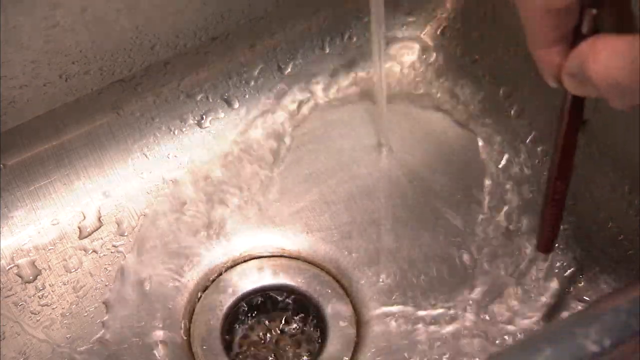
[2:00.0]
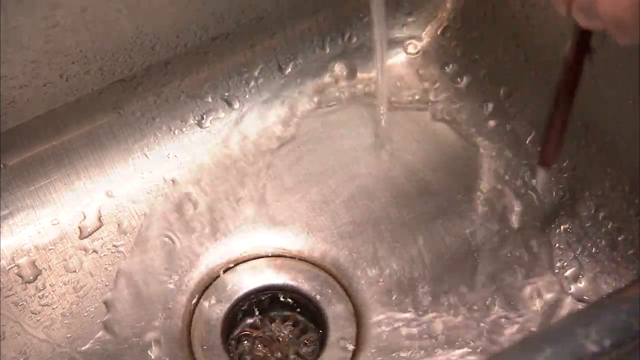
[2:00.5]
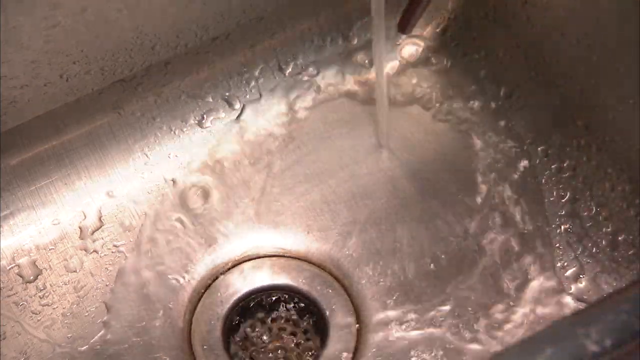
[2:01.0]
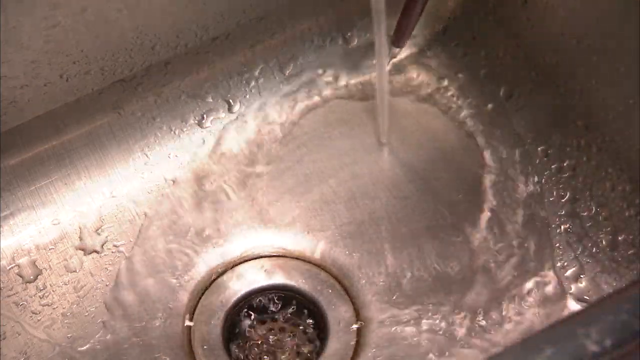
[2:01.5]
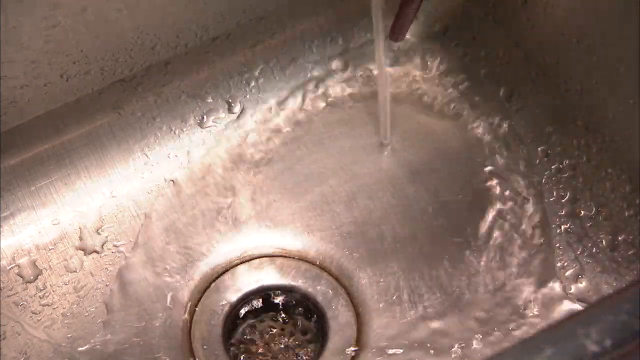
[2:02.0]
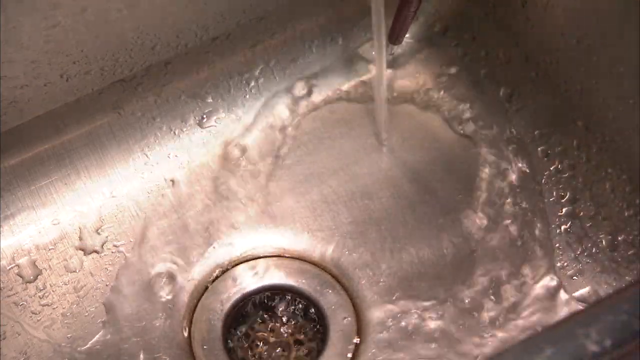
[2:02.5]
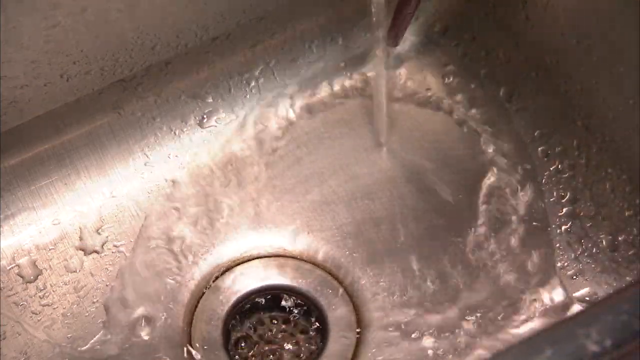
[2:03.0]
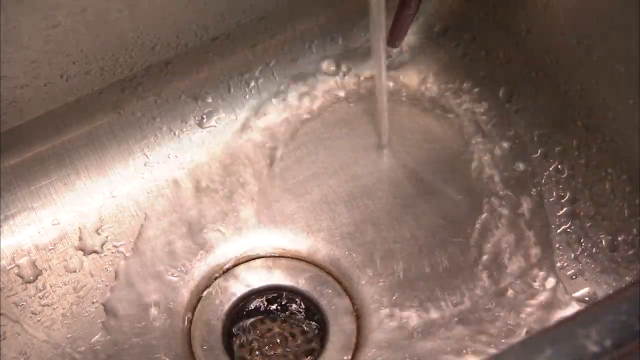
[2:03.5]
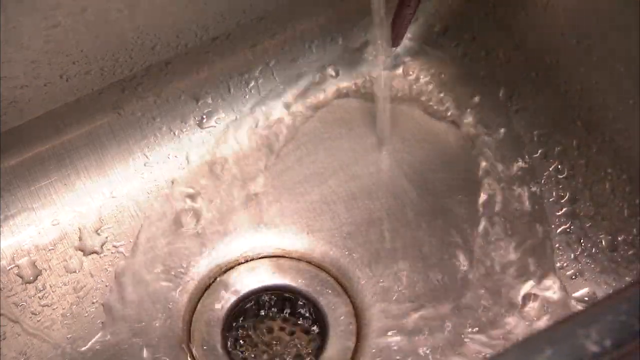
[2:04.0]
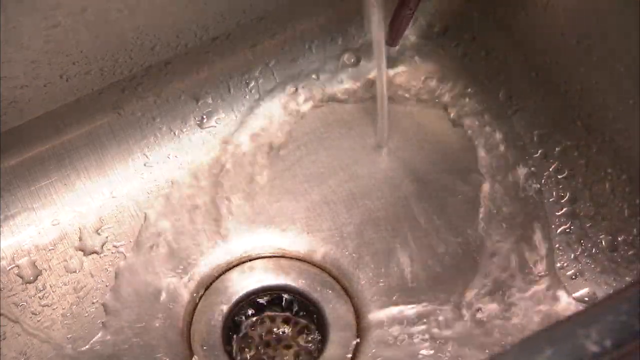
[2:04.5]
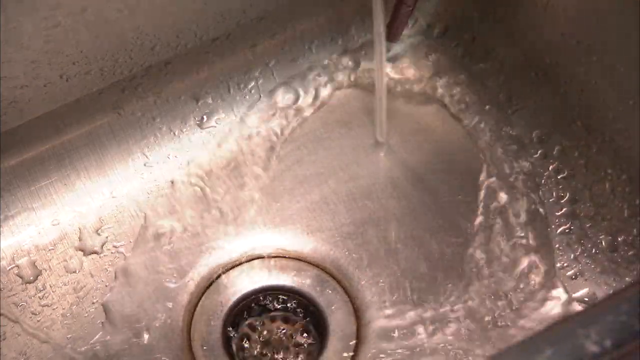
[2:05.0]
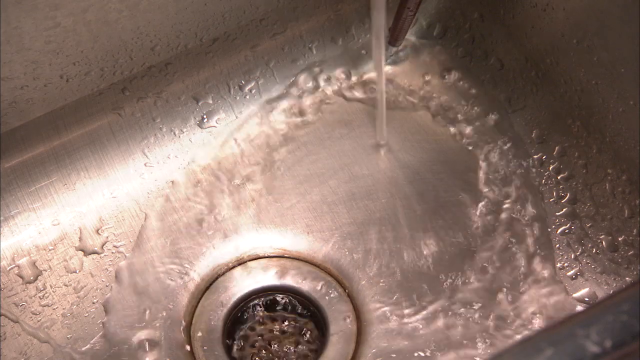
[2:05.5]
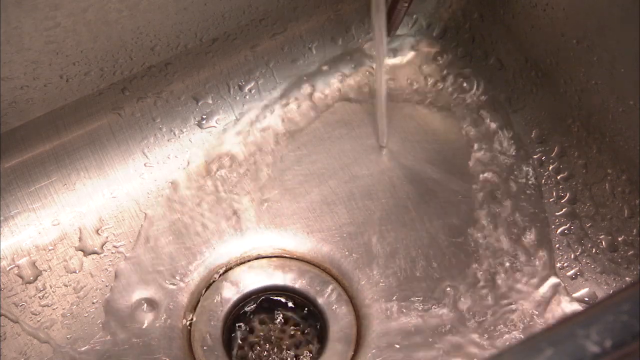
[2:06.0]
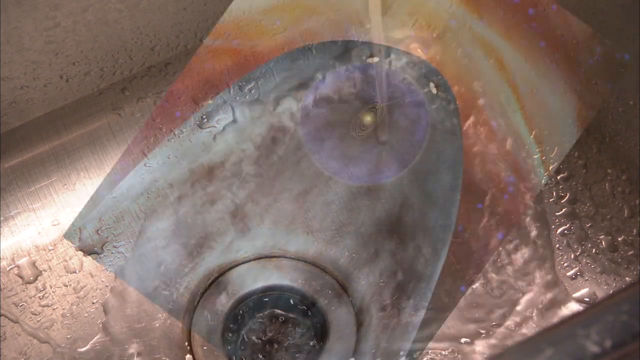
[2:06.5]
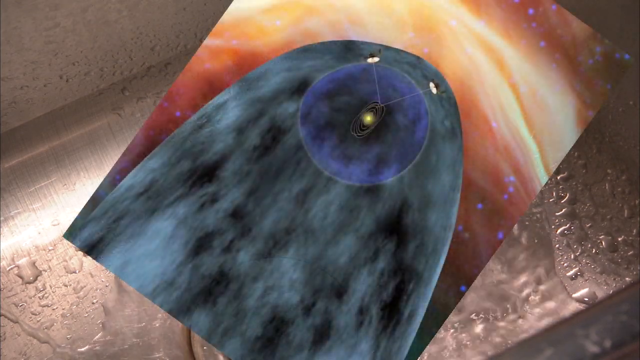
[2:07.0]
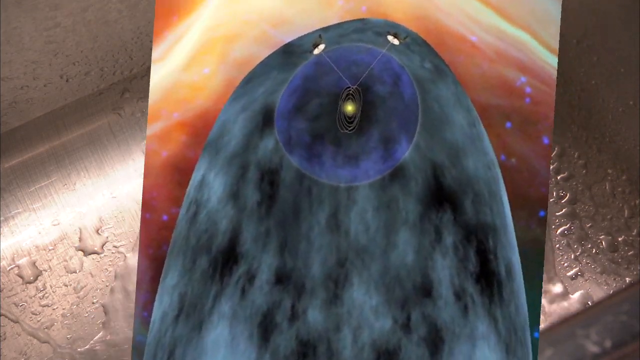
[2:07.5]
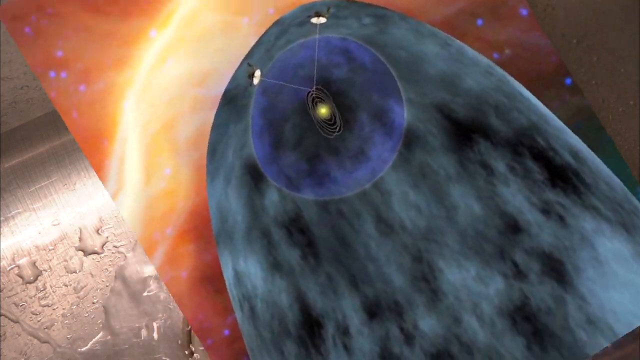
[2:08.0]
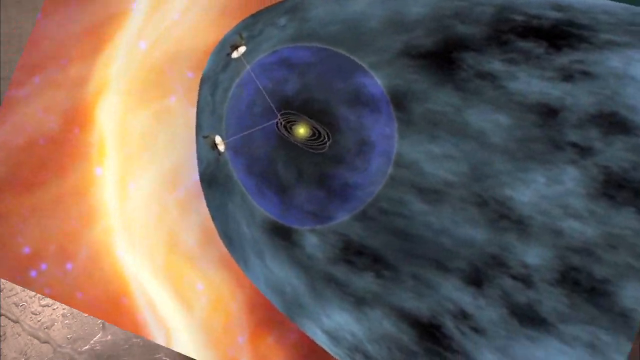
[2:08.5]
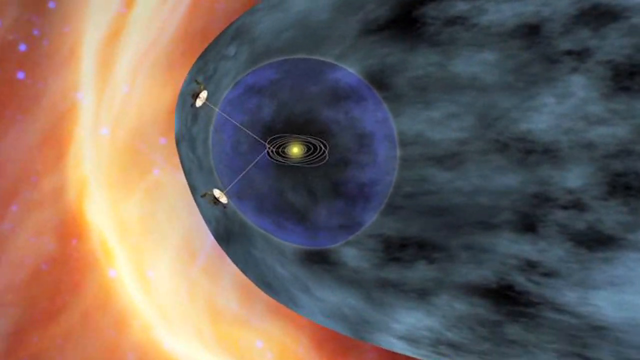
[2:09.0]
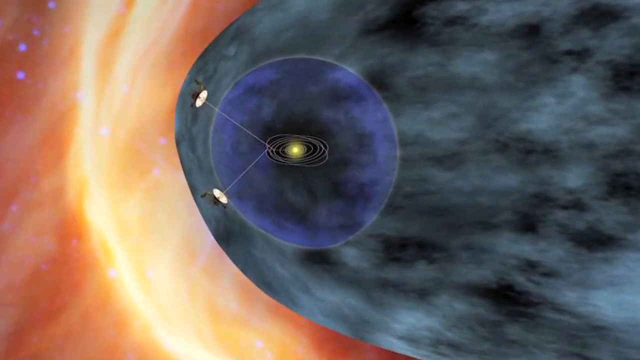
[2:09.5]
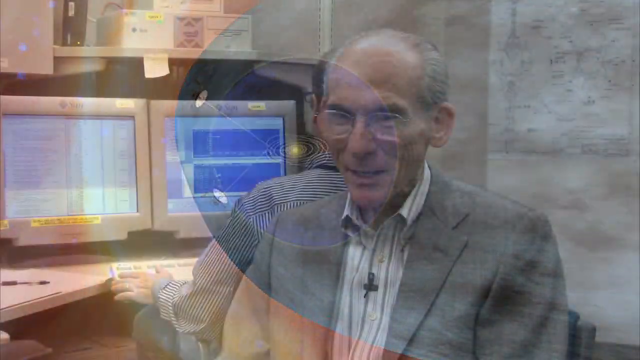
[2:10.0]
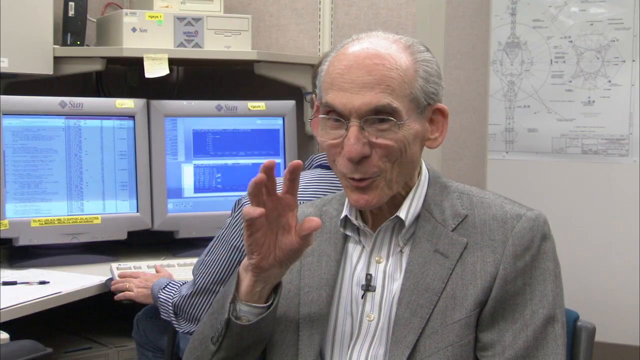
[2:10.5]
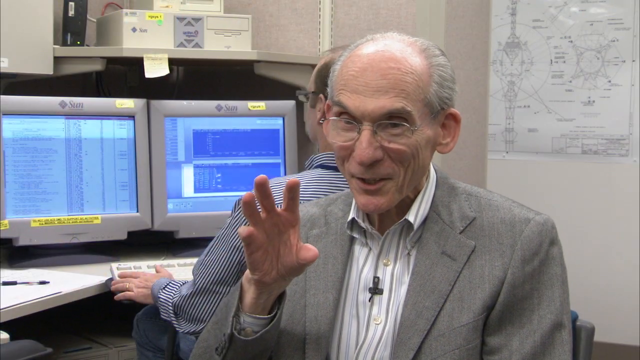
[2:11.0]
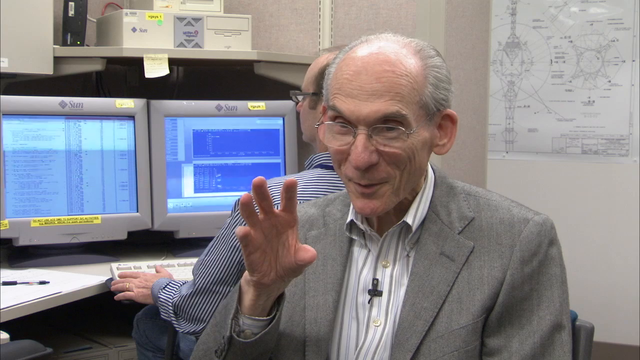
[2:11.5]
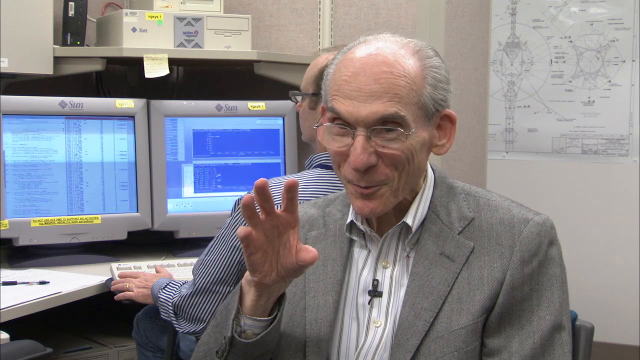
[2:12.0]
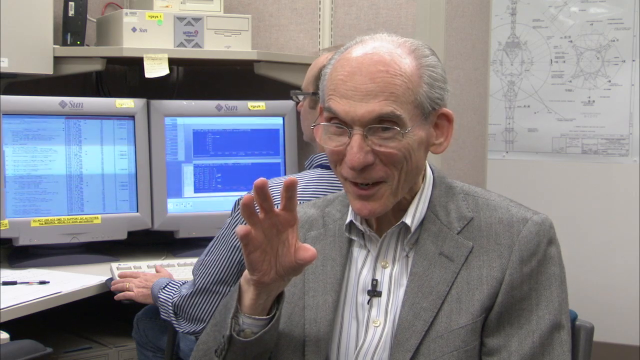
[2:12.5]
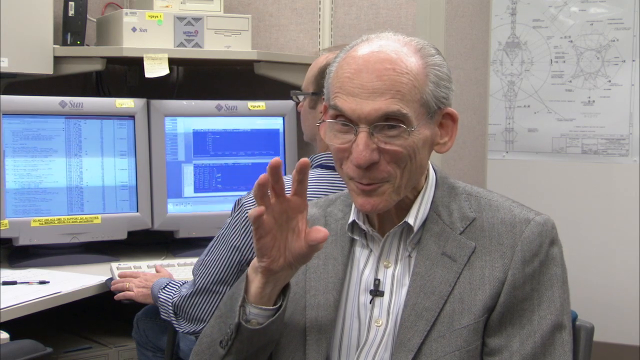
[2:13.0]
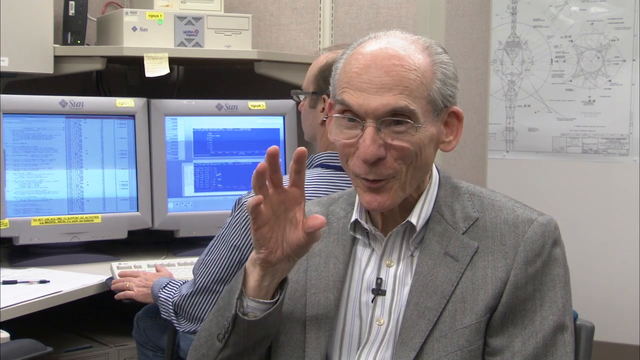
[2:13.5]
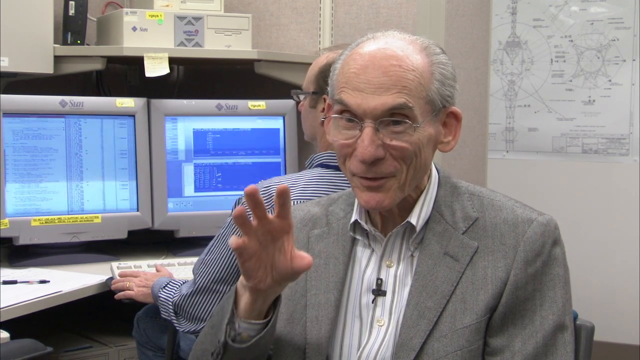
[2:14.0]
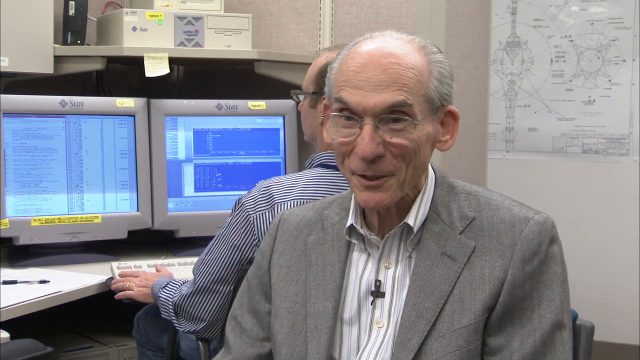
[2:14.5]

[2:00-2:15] A man points a pen at the water in the sink, holding it mainly in the upper right corner of the sink. The man is then in the office, sitting on a chair in front of his colleague, who sits in front of a computer with four screens and two keyboards. A diagram that looks like the Voyager is shown: its left side looks orange, its right side a dark blue-grayish color, and in the center is a picture that looks like a planet that the satellites are orbiting, with them pointing toward the center of that planet.